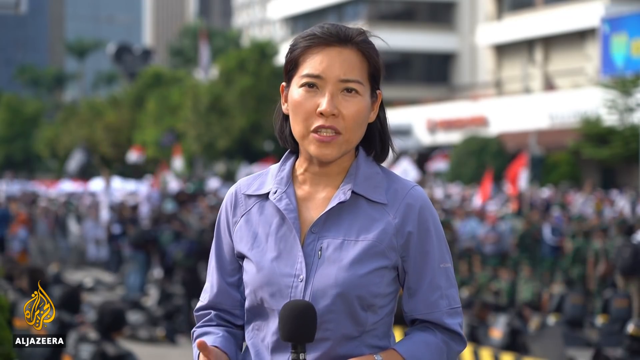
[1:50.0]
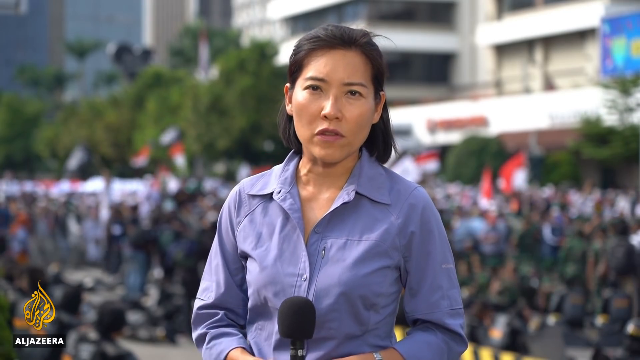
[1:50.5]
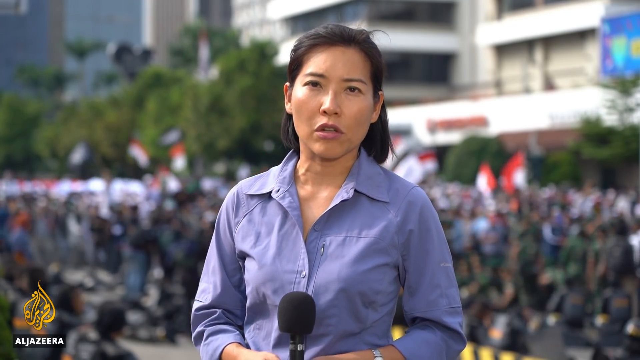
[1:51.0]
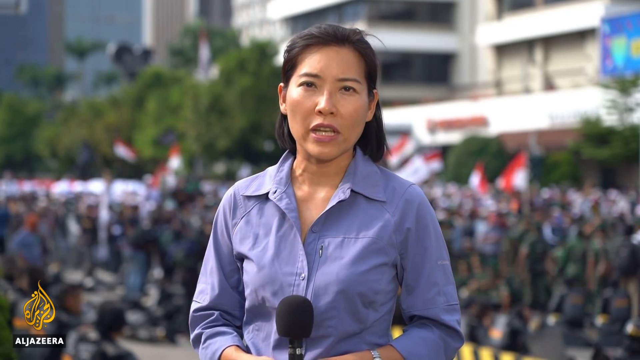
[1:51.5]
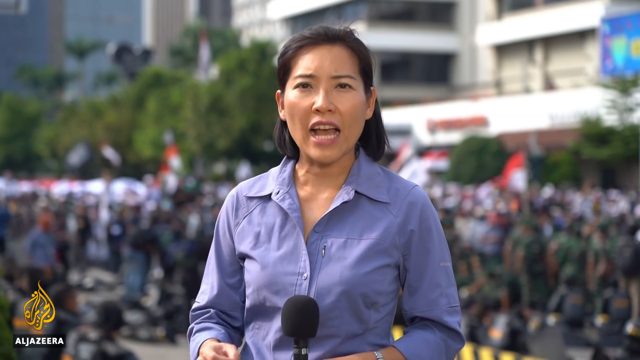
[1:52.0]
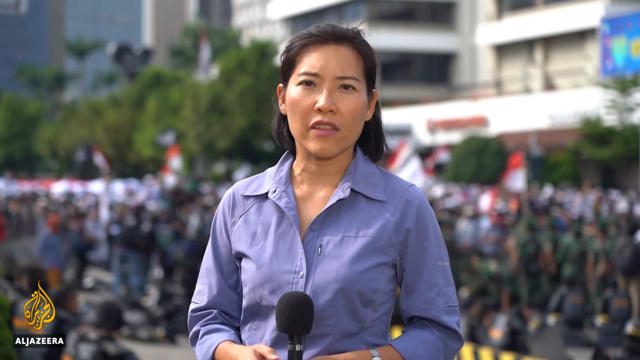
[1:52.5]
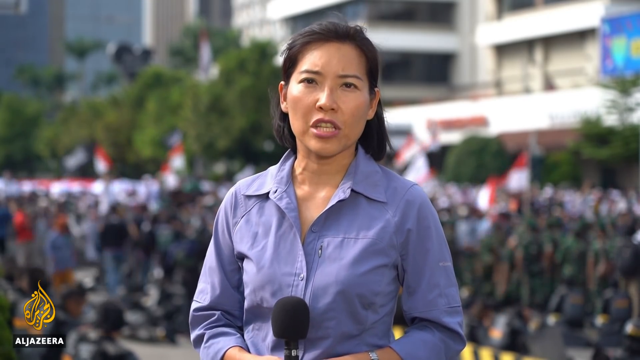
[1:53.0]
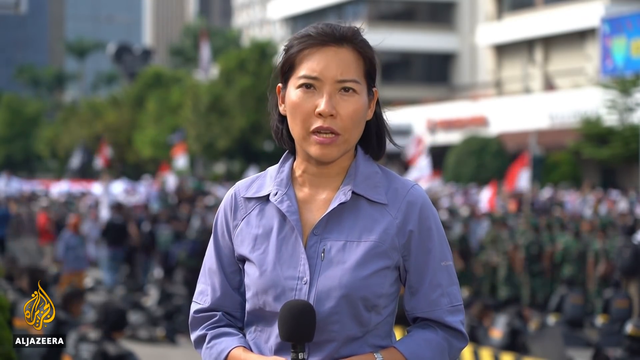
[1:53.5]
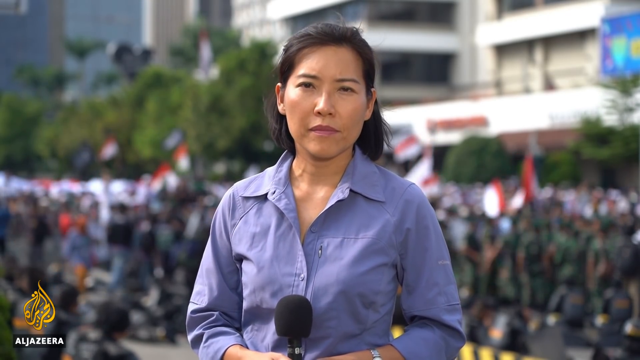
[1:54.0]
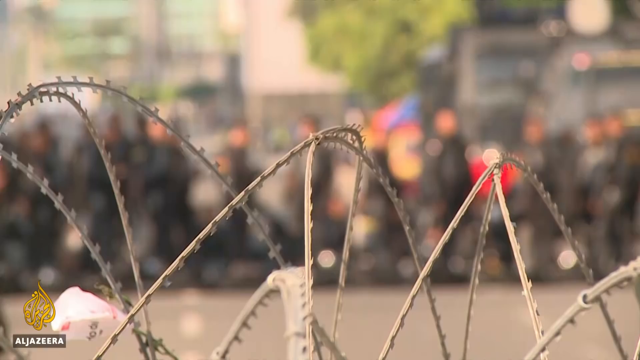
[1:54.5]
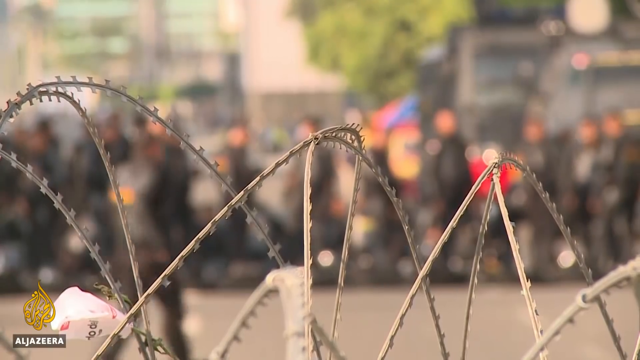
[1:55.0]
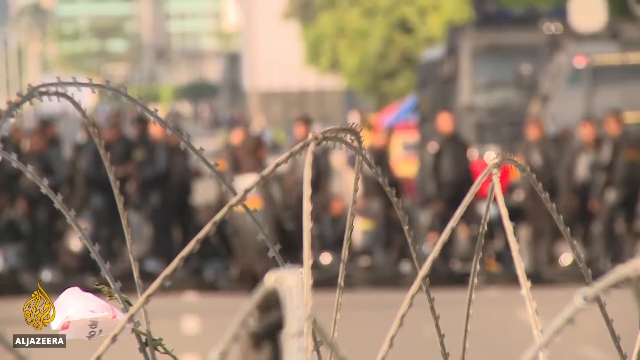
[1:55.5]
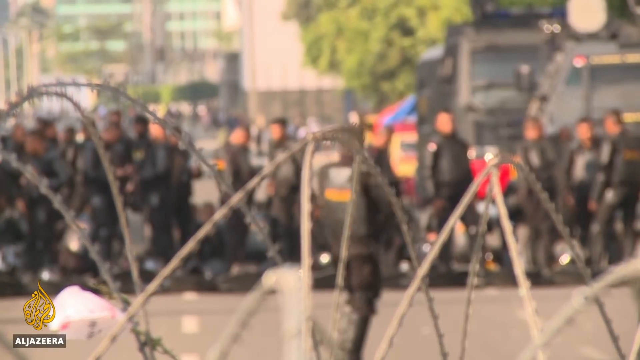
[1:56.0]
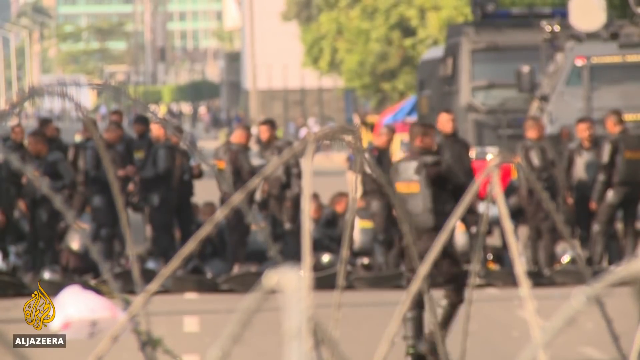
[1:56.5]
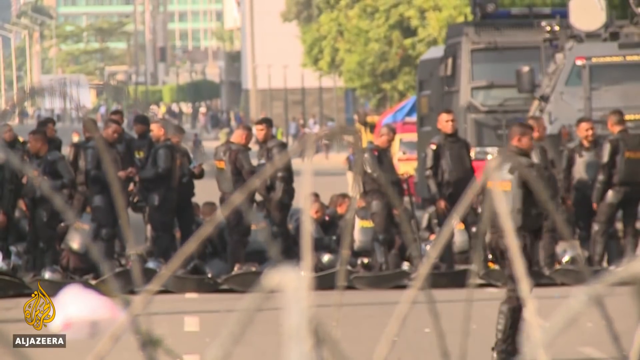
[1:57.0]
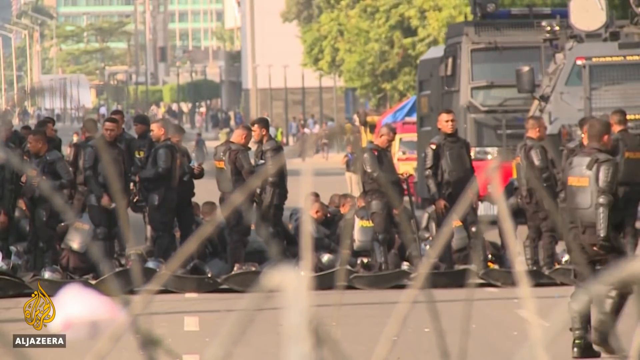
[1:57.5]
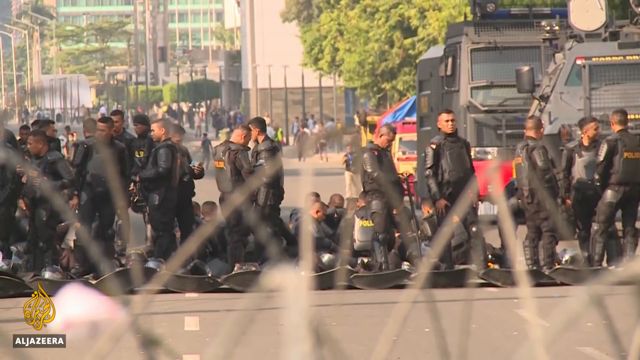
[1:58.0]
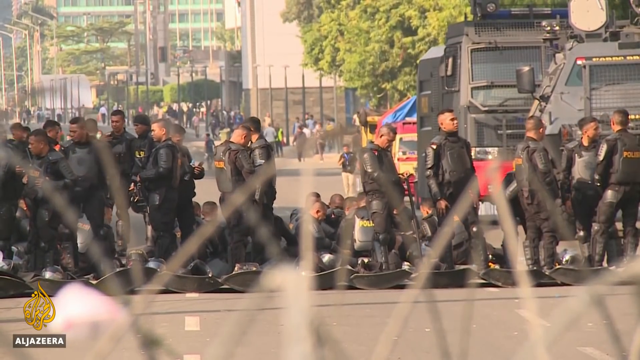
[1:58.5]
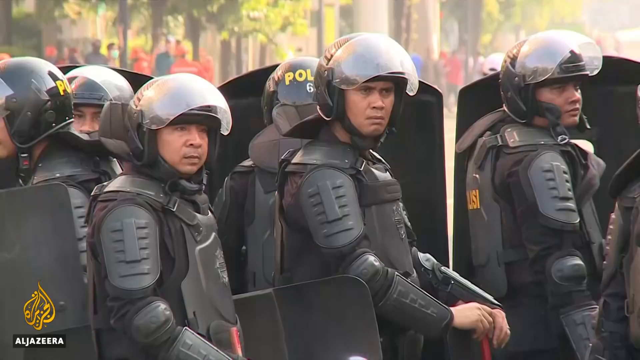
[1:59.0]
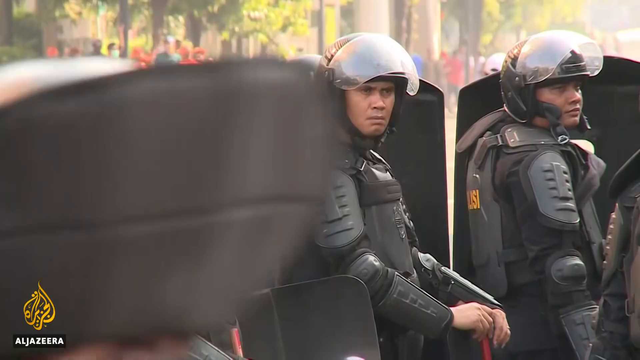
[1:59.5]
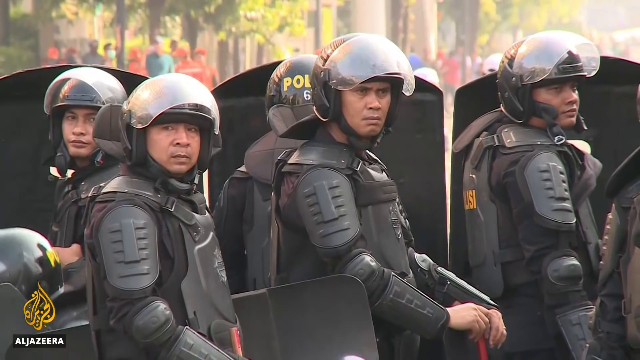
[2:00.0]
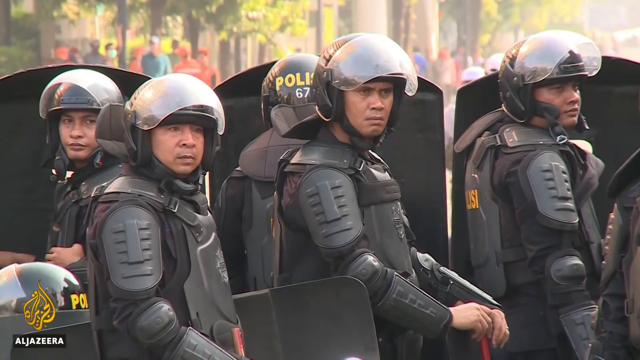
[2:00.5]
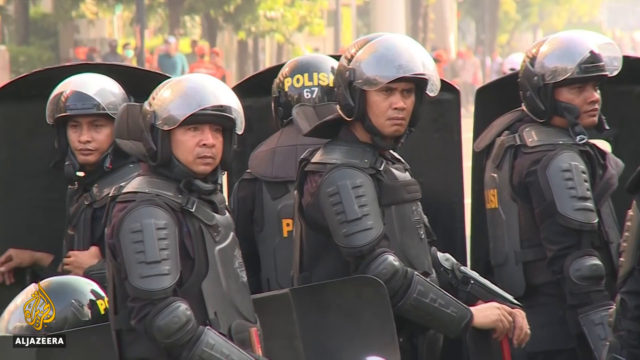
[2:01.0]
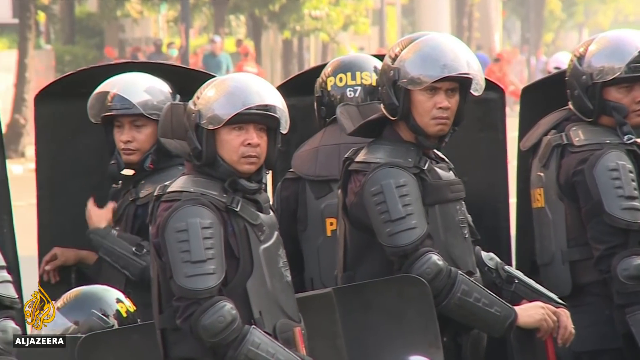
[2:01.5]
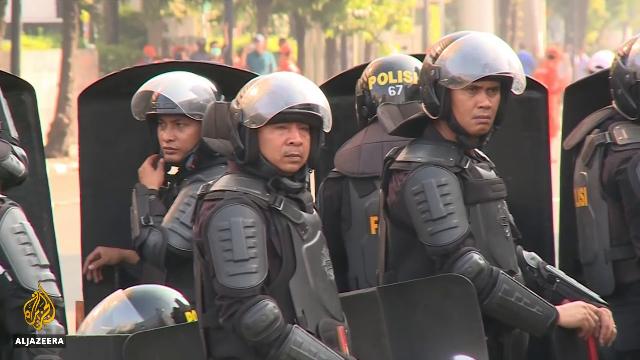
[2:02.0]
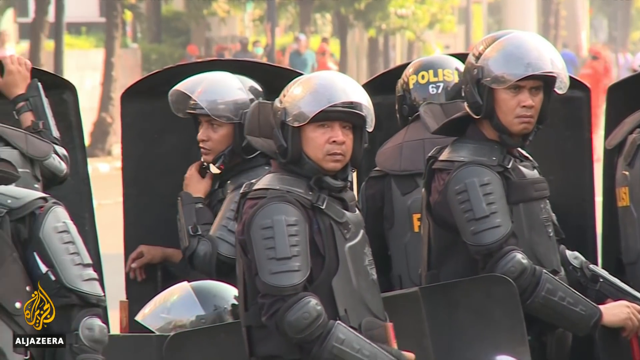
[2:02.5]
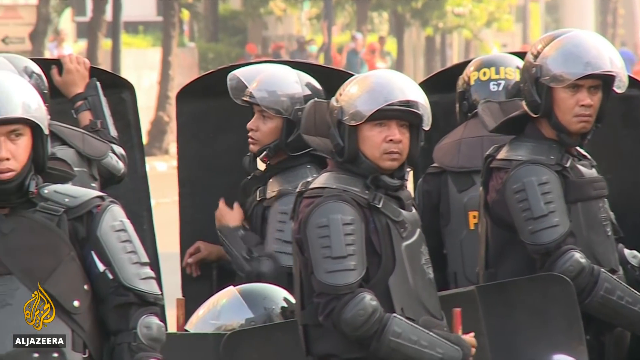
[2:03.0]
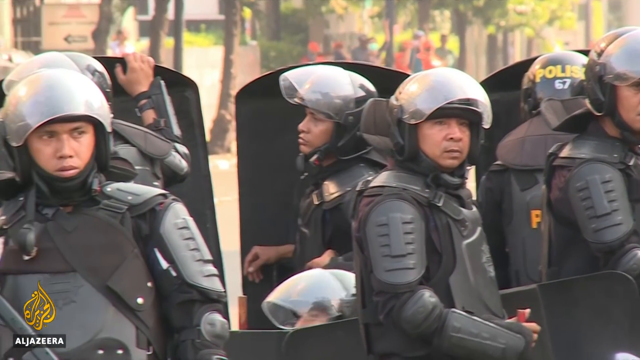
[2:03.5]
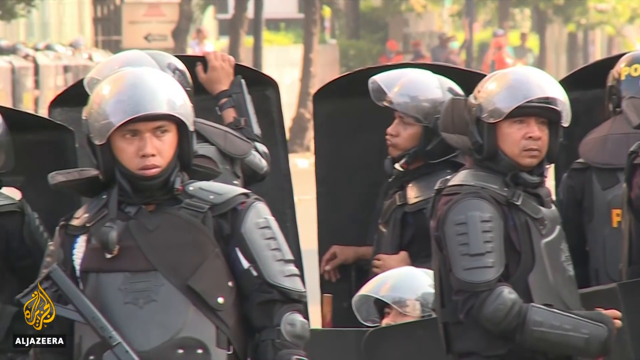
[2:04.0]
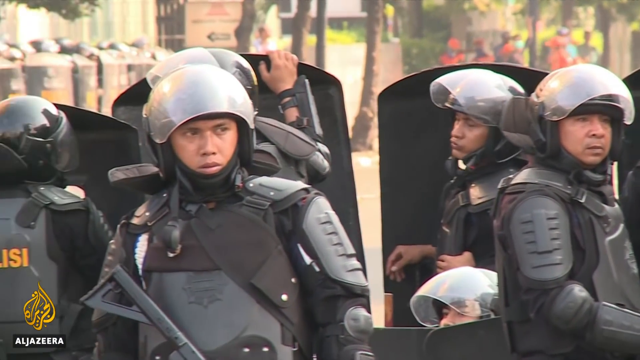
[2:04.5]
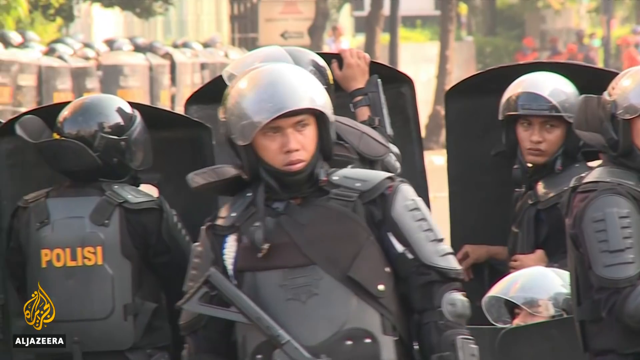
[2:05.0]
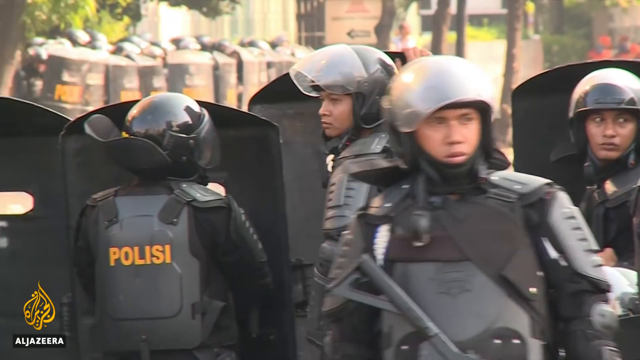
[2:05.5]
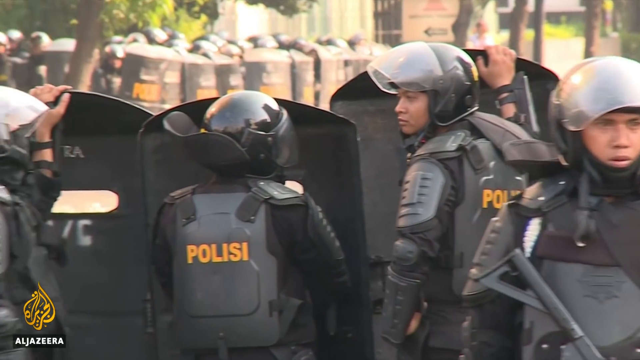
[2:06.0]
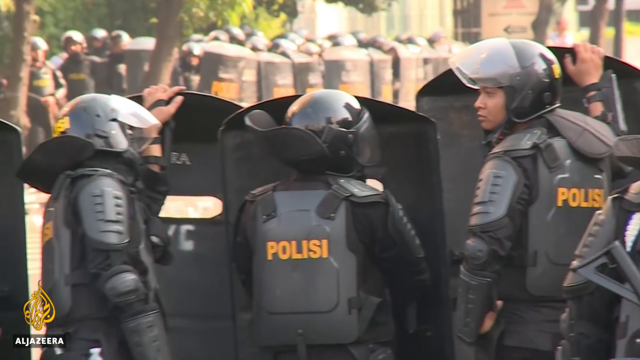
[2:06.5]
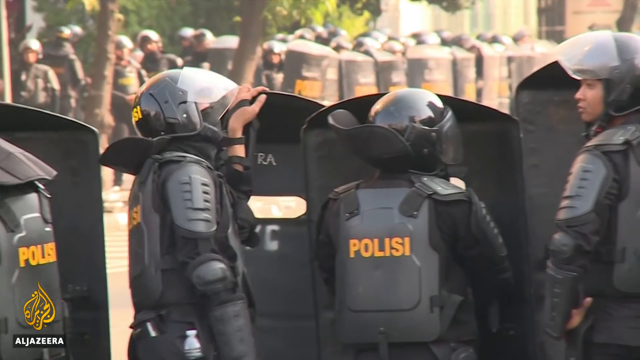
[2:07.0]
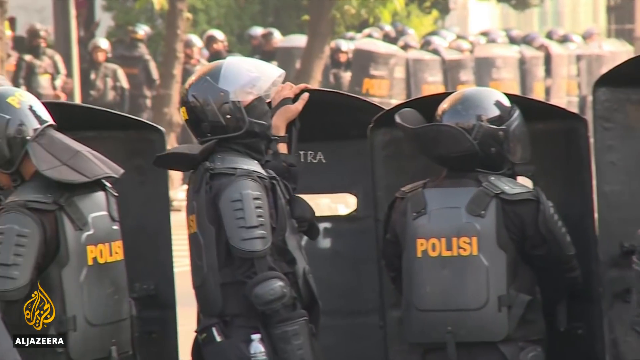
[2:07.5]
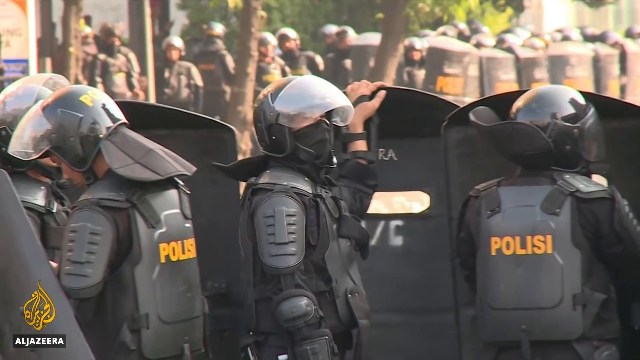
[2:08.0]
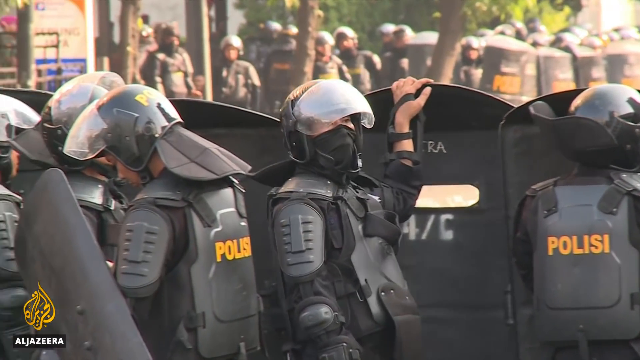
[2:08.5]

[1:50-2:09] A reporter named Looi reports in Indonesia. Many police stand on guard in lines with big body shields in front of them, ready to control the crowd, which flies red and white flags. The police have put a coiled barbed-wire barrier right in the street. They wear helmets with face shields that come over and basically armored body wear. The Aljira TV logo is in the lower left-hand corner. The police also have heavy Humvees that they drive and have parked in the street. Right now it looks peaceful, and the crowd appears to be under control.